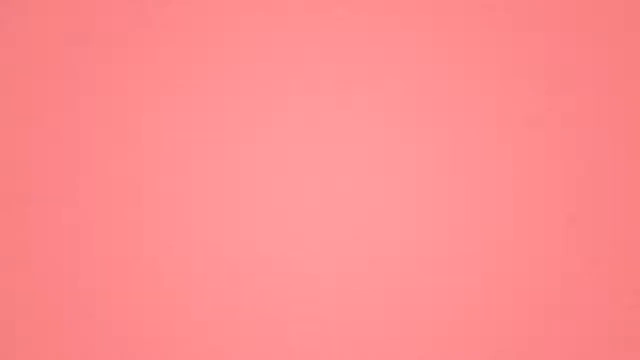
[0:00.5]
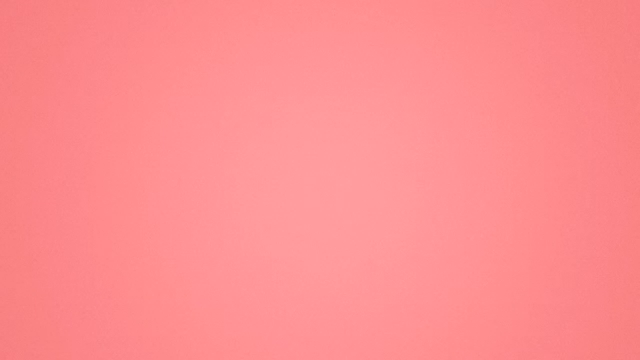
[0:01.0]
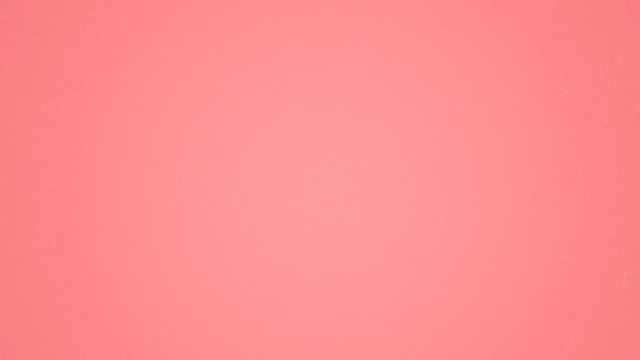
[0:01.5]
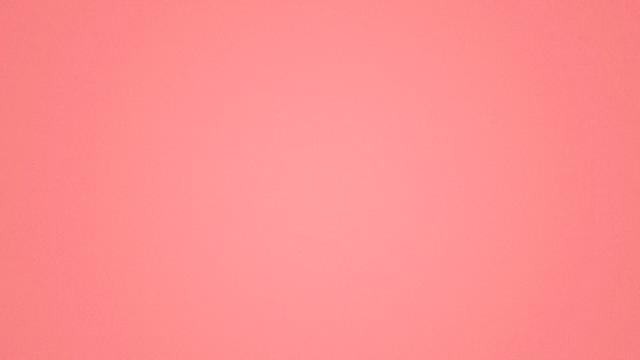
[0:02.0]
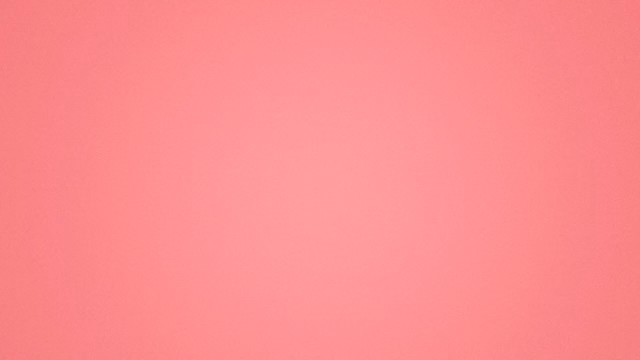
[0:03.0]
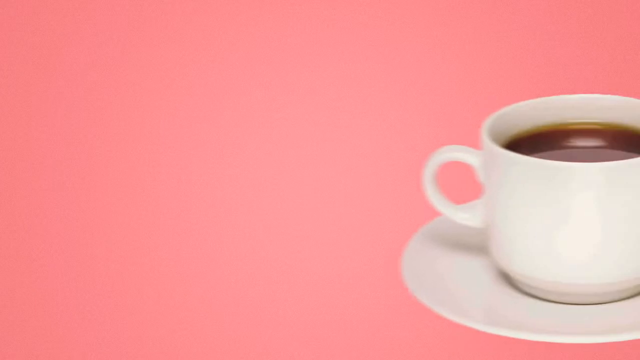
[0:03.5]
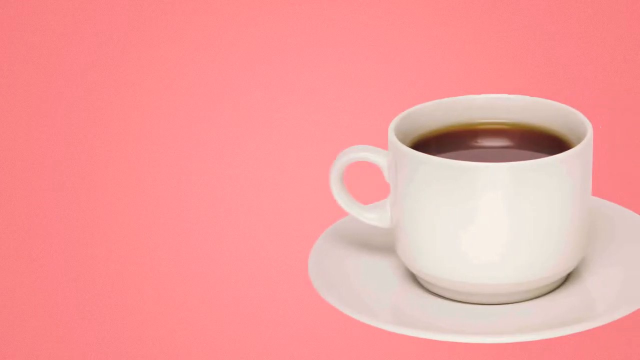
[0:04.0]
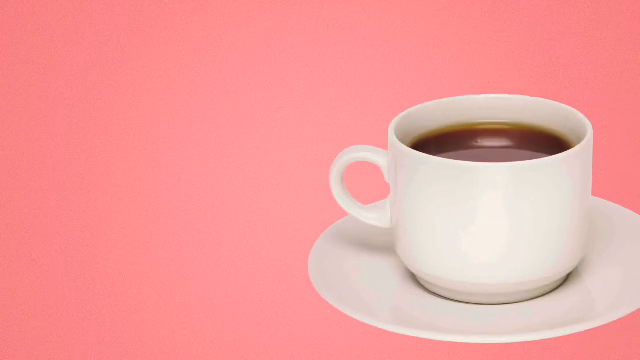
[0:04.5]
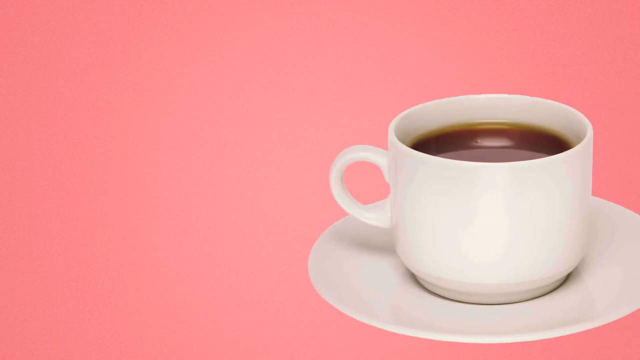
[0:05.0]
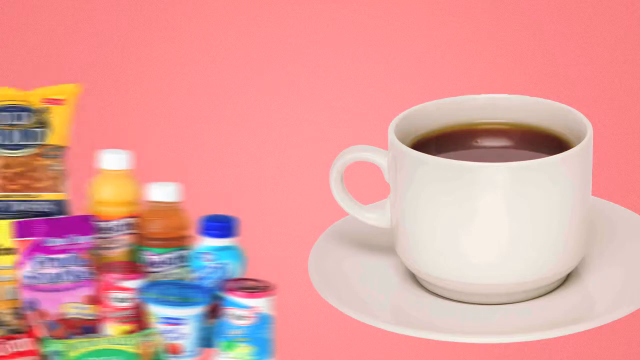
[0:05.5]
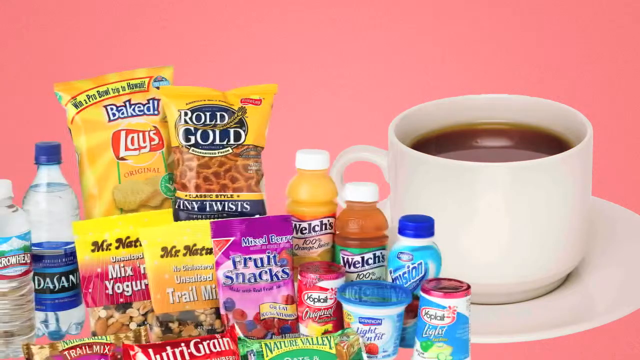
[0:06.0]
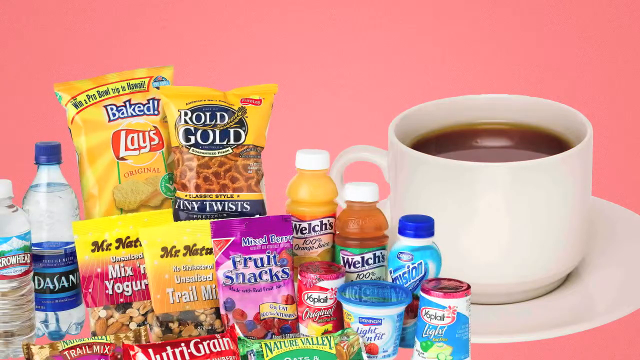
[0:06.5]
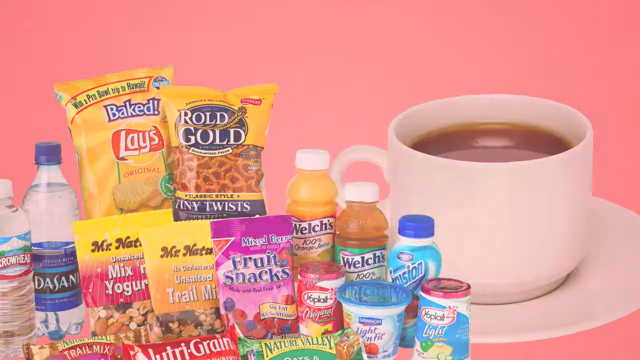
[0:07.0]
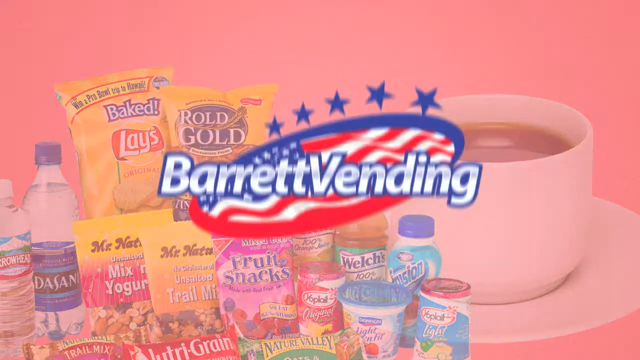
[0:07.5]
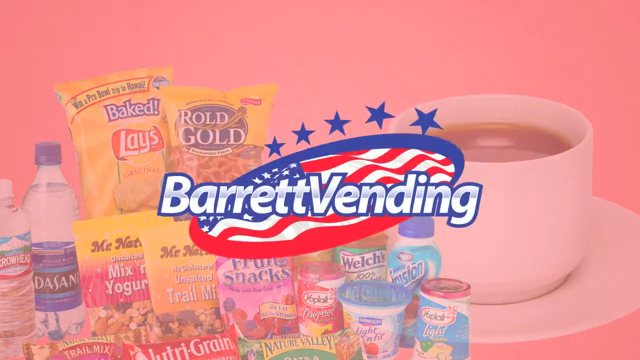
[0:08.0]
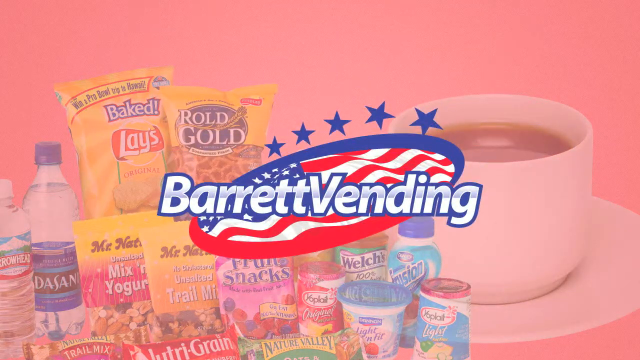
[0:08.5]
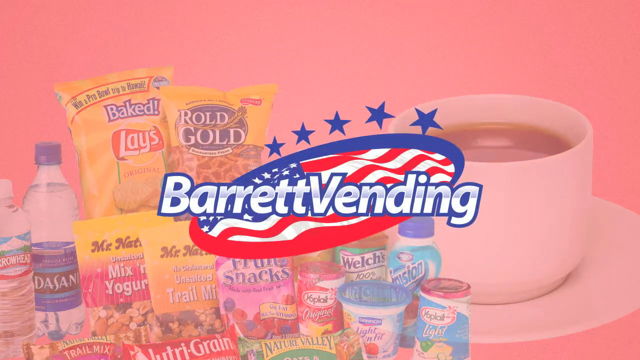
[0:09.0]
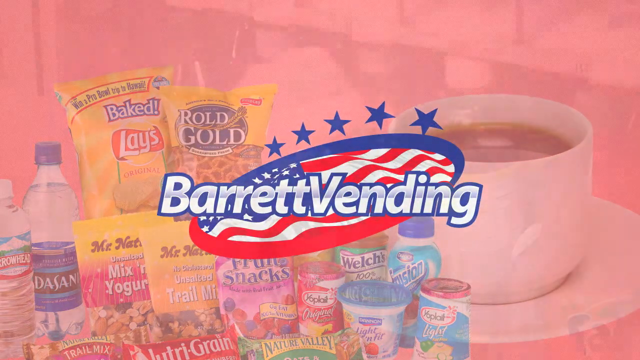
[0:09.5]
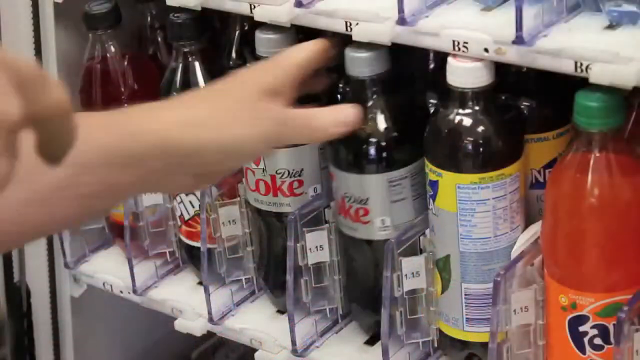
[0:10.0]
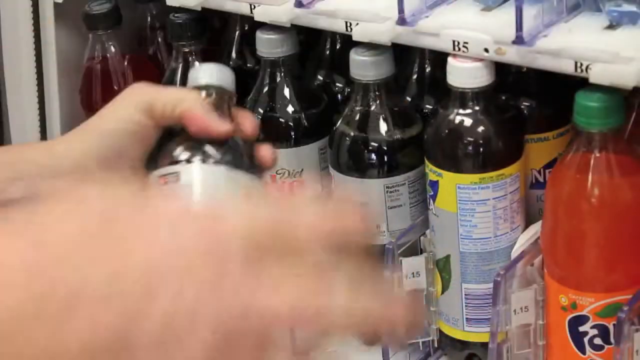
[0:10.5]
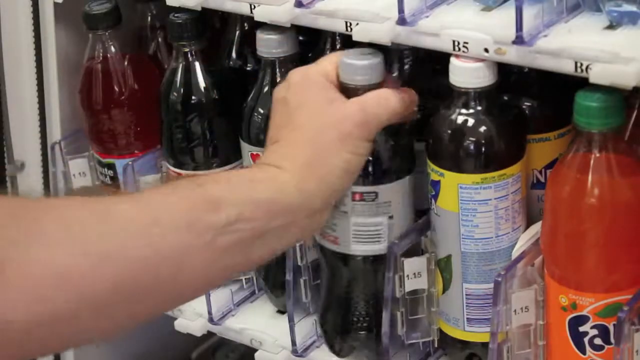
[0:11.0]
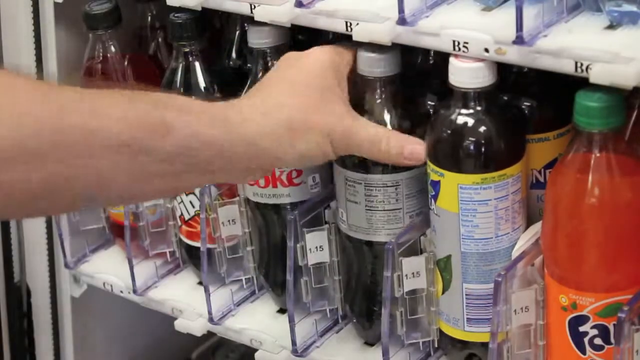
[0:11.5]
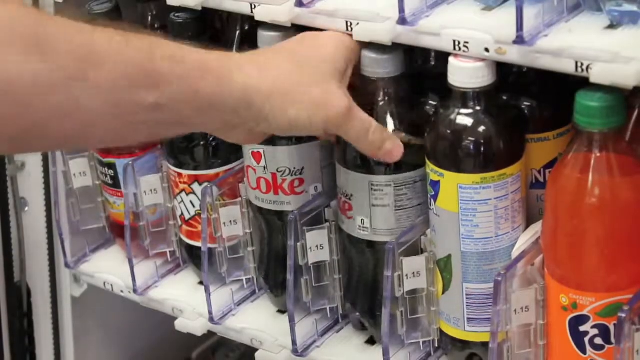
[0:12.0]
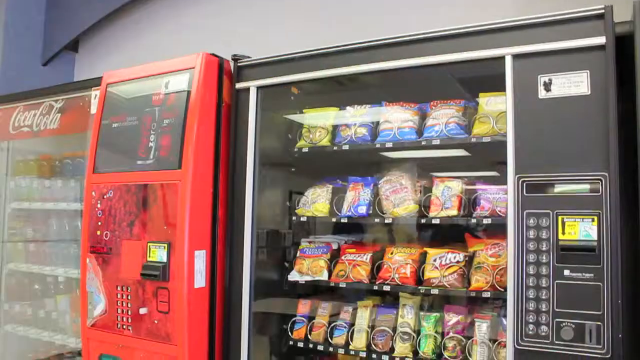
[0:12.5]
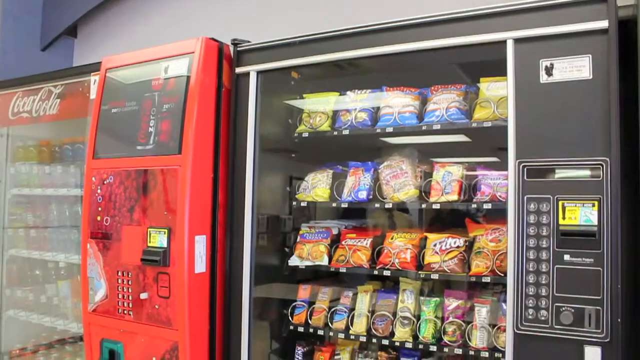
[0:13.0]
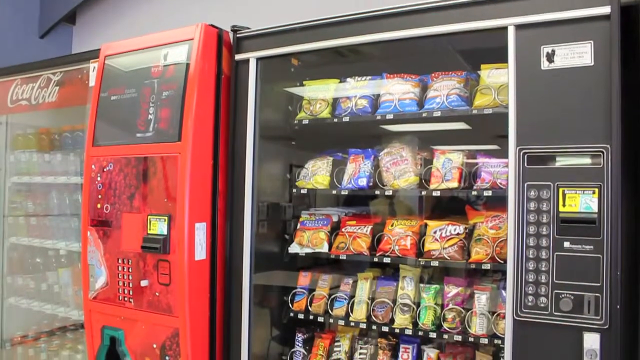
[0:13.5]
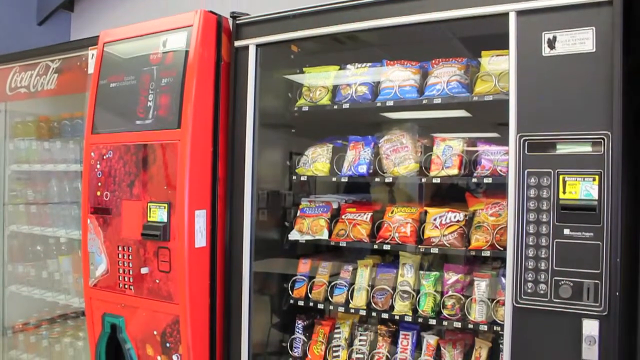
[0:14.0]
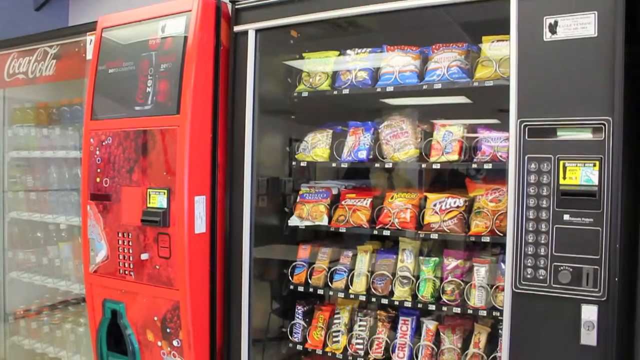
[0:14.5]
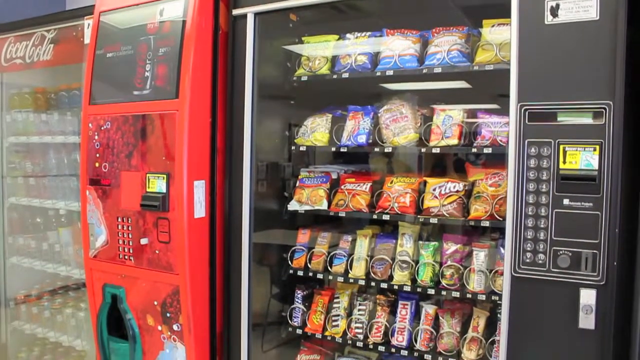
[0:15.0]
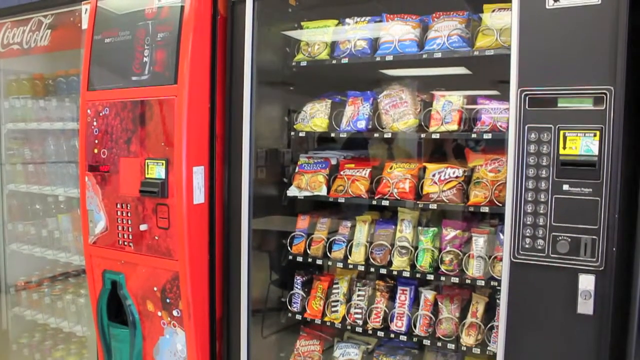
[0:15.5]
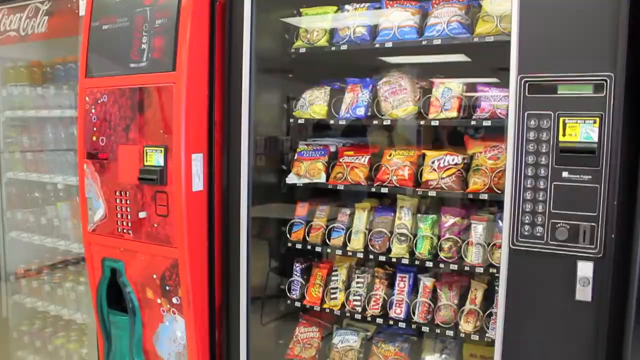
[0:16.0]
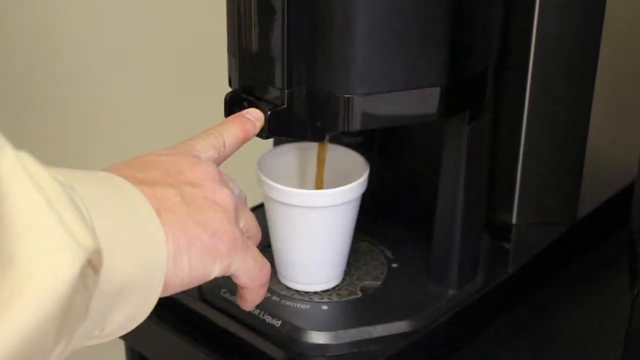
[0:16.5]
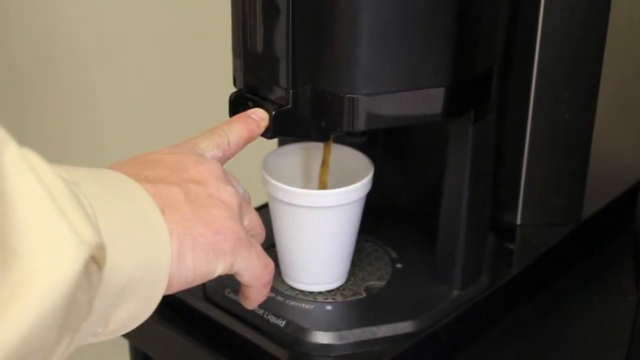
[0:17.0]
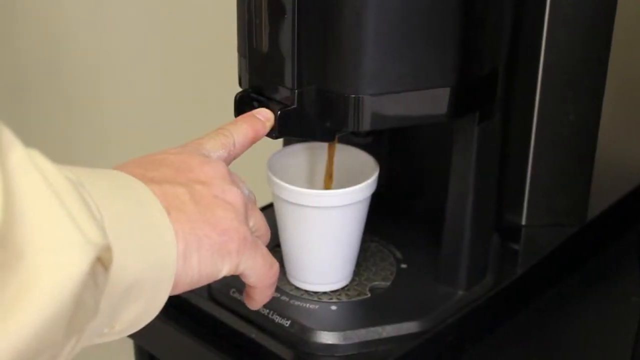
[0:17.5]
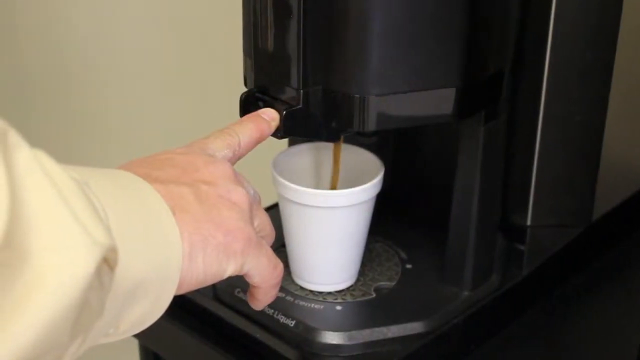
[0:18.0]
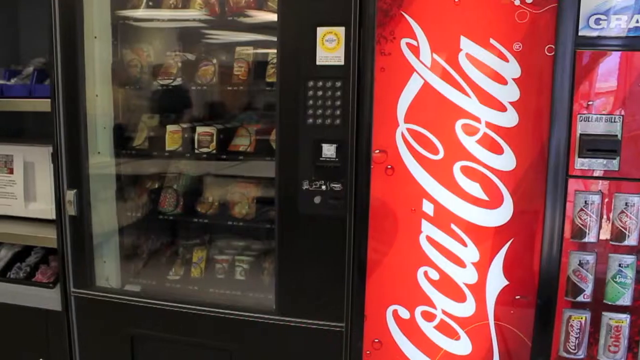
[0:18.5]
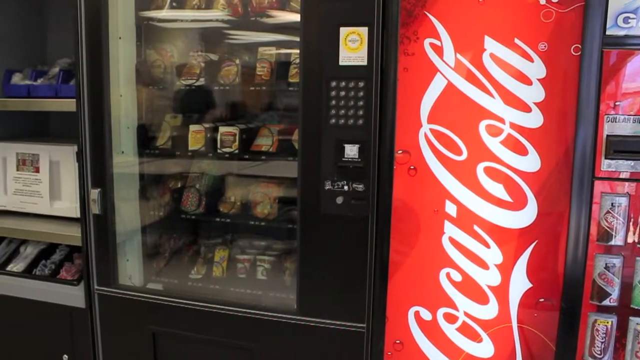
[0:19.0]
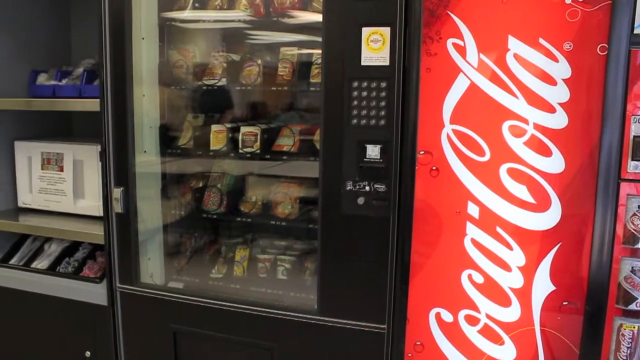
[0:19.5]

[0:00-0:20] The video seems to be some sort of promotion. It starts with a pink screen, then a white coffee cup with a plate underneath it appears, and different snacks and drinks start showing up: Dasani and growhead water, Welch's orange juice, another Welch's juice, fruit snacks, potato chips, tiny twists, and other drinks and snacks. It is a promotion for Barrett vending machines. Diet Cokes are put into the machines, which hold different drinks. There are two vending machines: one for snacks such as Doritos, Cheetos and potato fries, and one for drinks that carries the Coca-Cola brand and different products. Coffee is also poured from the machine into the cup.